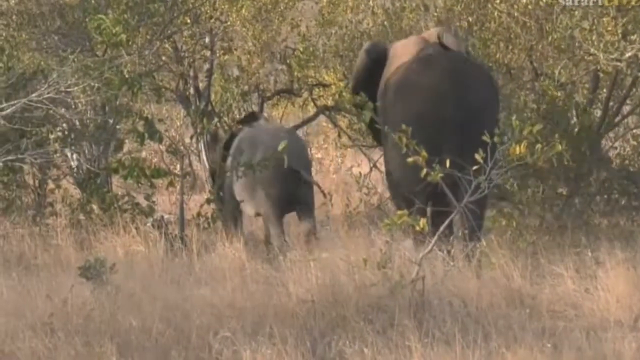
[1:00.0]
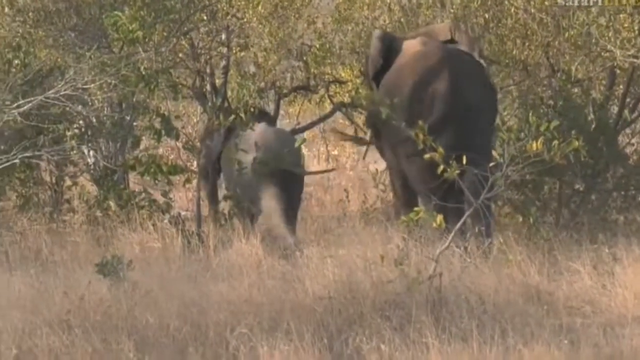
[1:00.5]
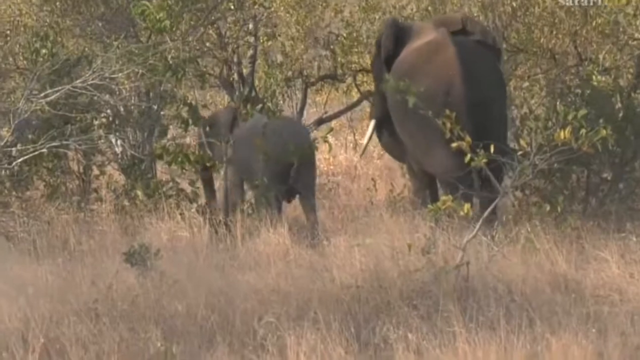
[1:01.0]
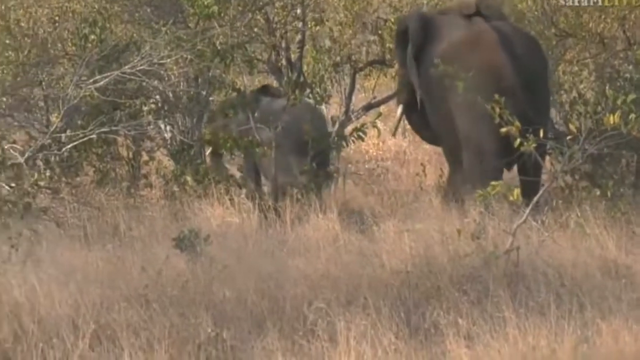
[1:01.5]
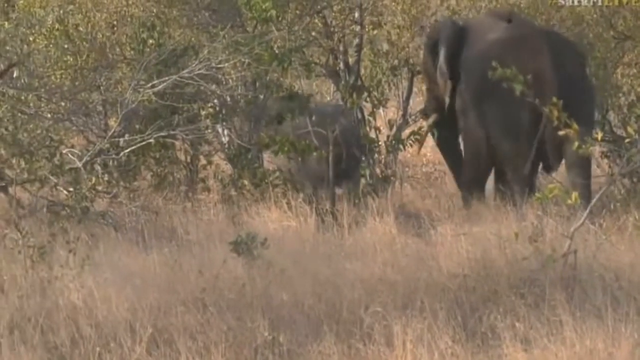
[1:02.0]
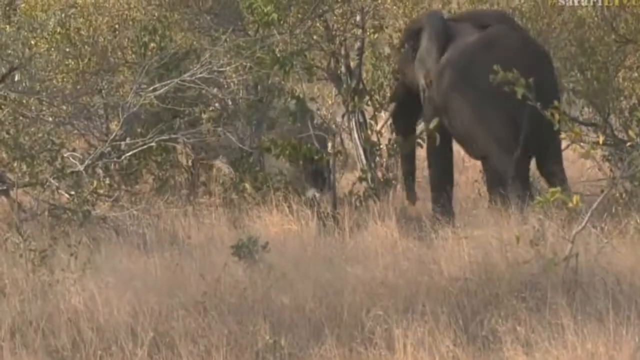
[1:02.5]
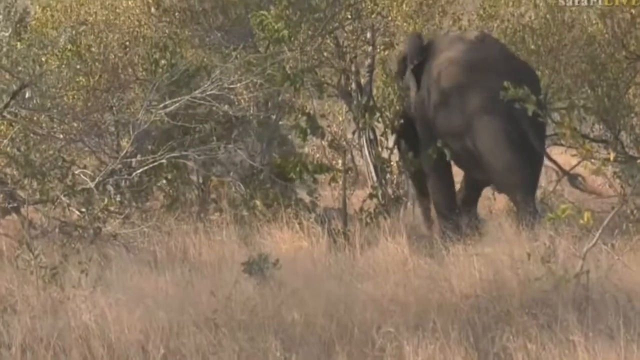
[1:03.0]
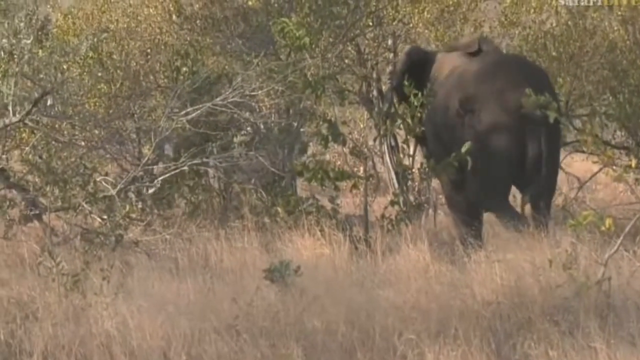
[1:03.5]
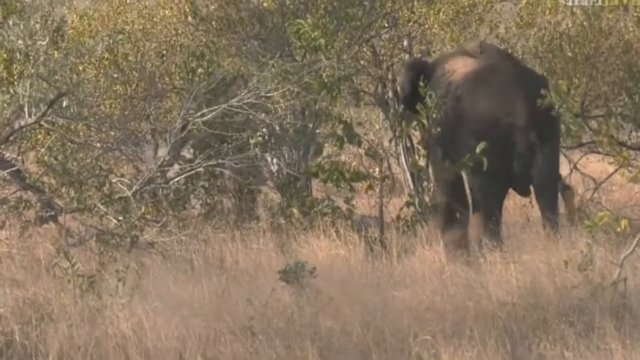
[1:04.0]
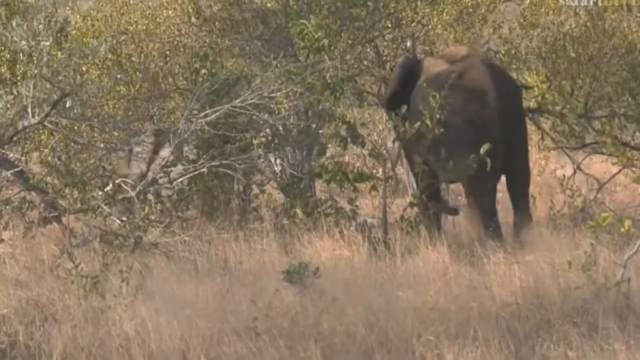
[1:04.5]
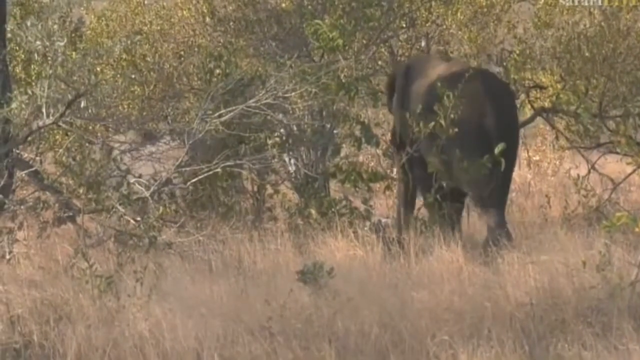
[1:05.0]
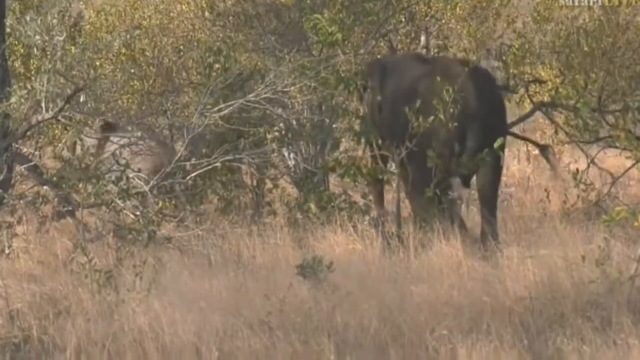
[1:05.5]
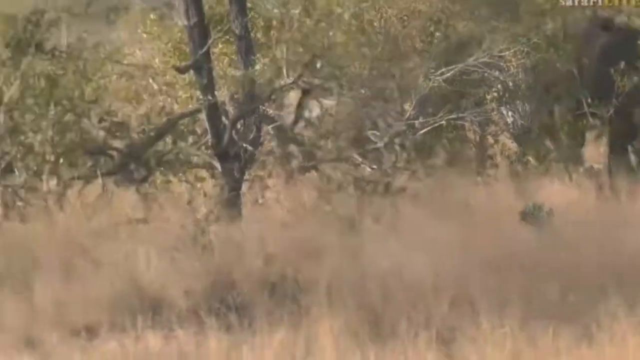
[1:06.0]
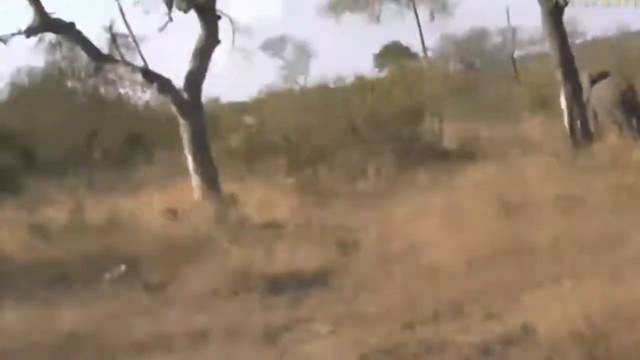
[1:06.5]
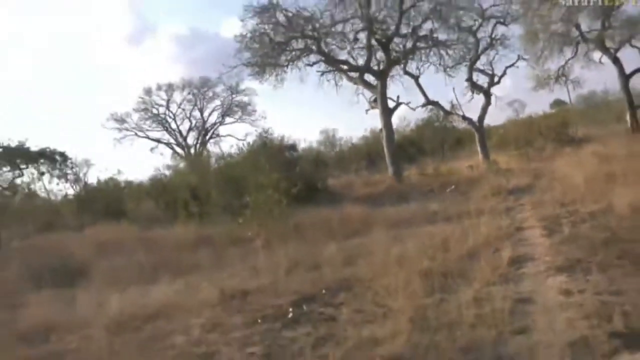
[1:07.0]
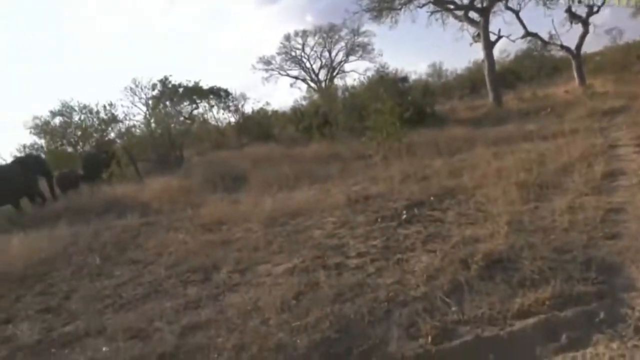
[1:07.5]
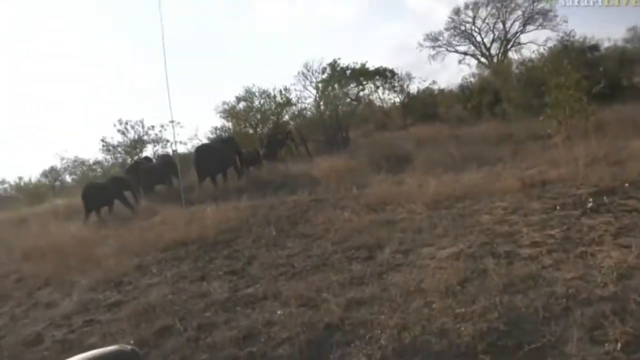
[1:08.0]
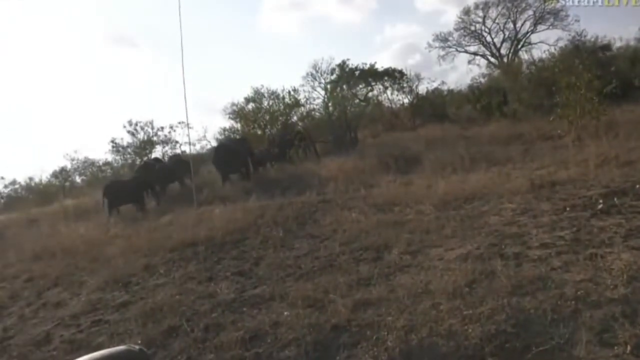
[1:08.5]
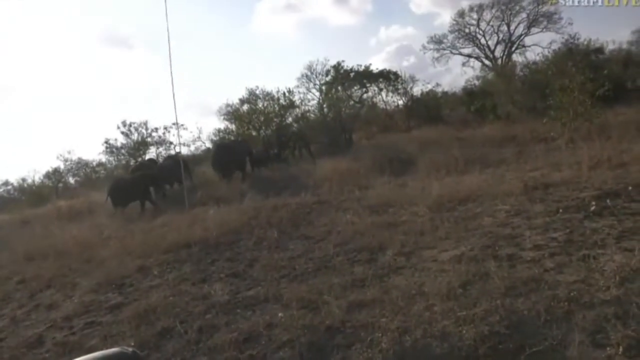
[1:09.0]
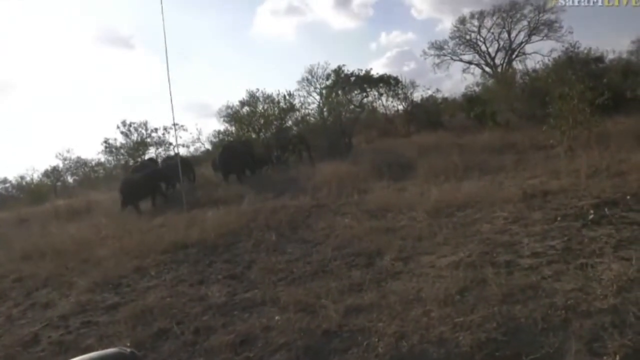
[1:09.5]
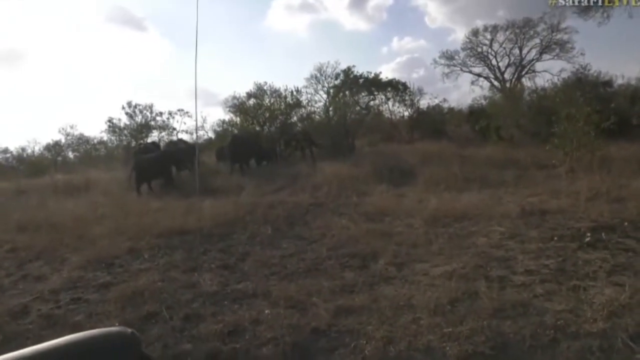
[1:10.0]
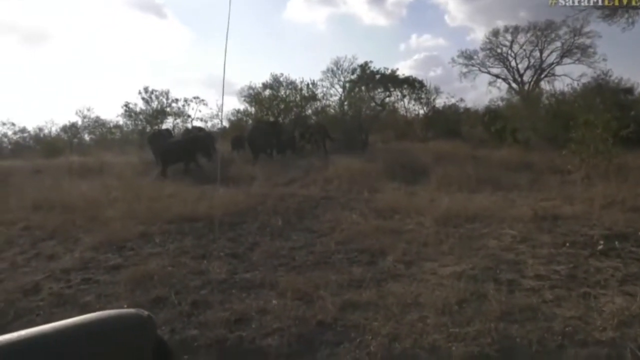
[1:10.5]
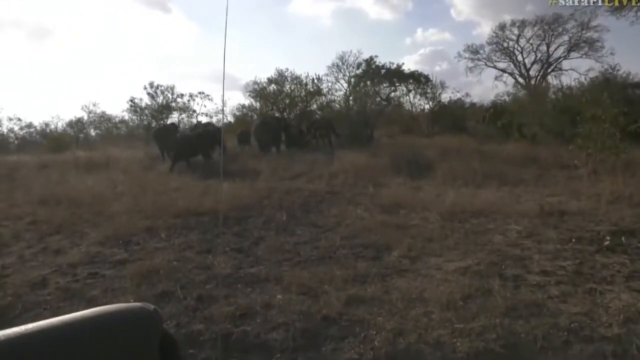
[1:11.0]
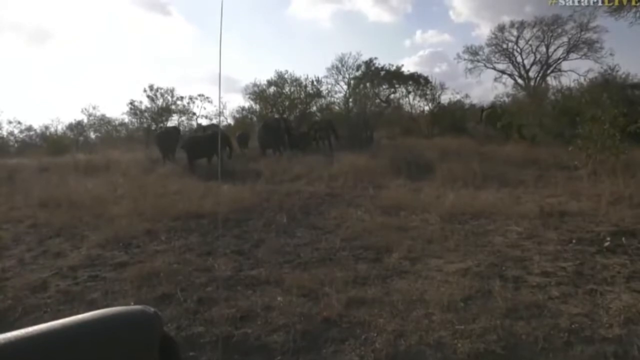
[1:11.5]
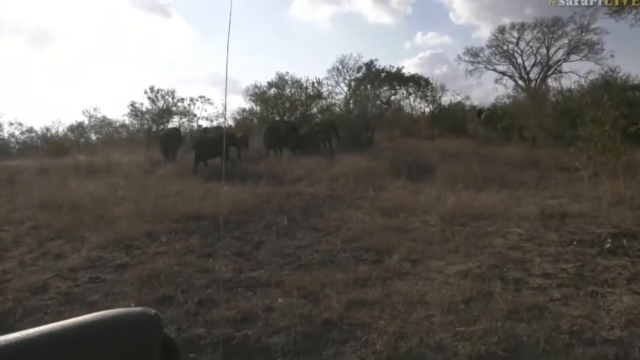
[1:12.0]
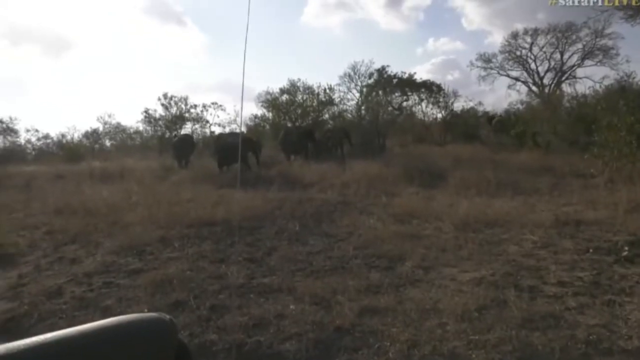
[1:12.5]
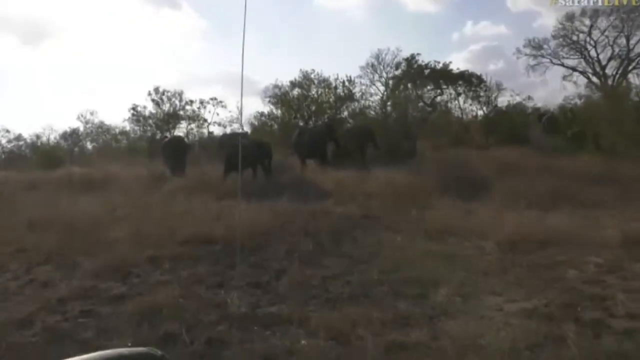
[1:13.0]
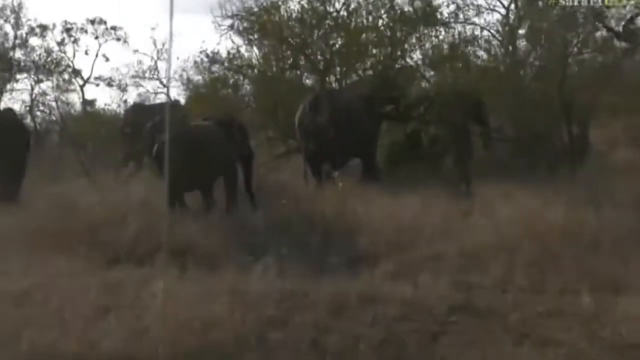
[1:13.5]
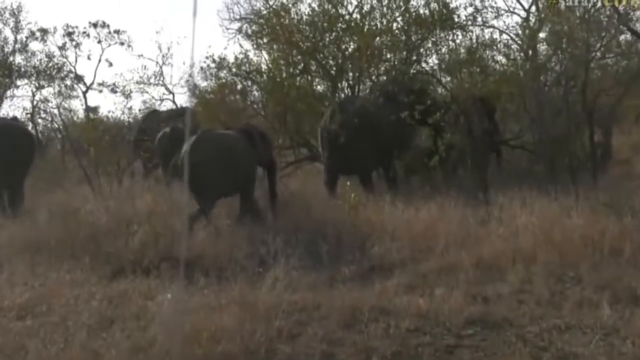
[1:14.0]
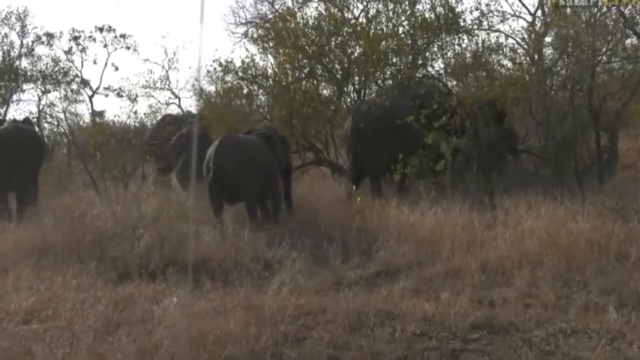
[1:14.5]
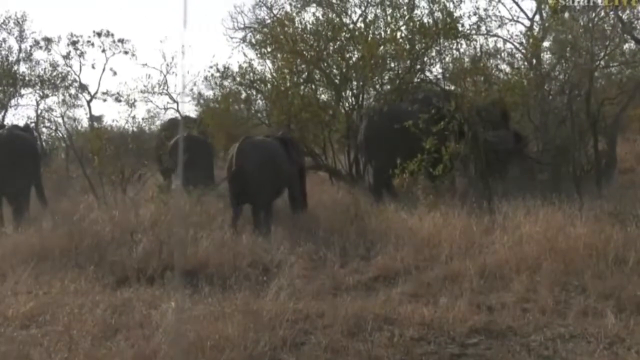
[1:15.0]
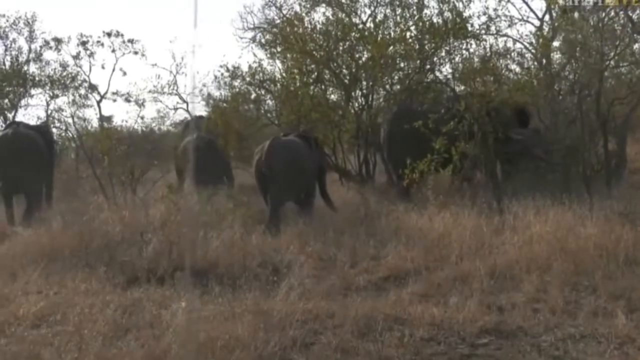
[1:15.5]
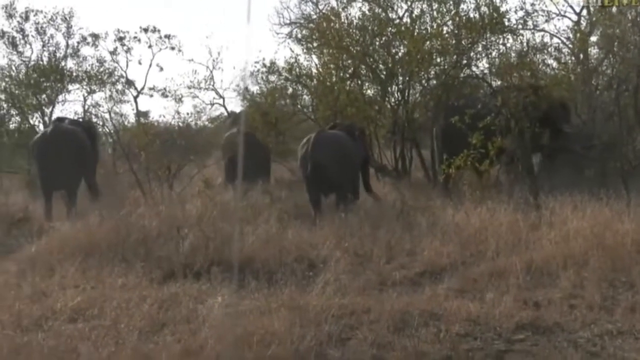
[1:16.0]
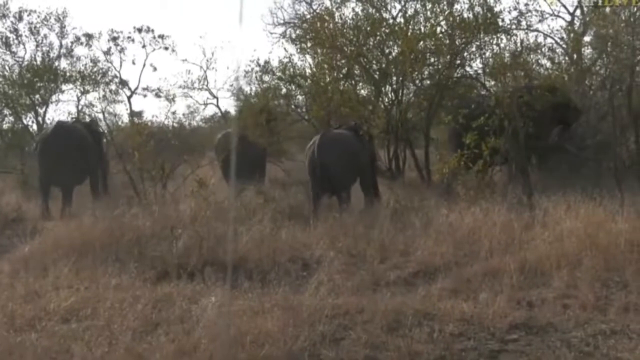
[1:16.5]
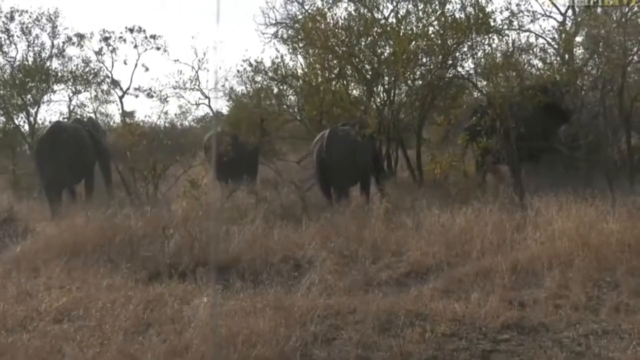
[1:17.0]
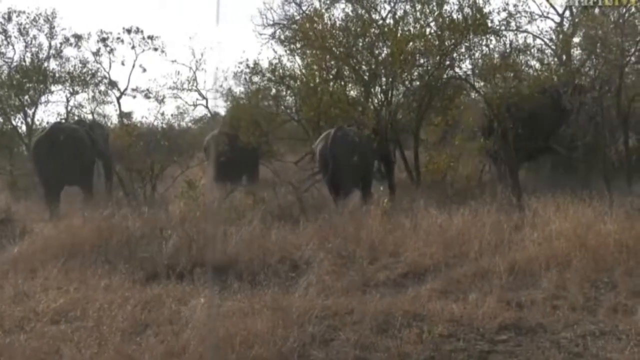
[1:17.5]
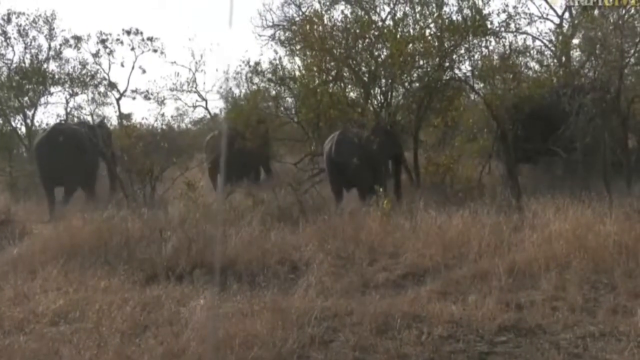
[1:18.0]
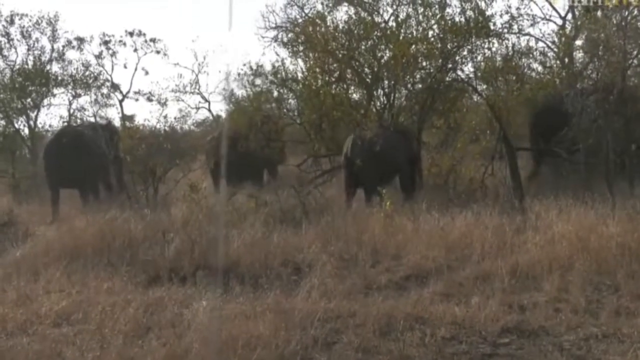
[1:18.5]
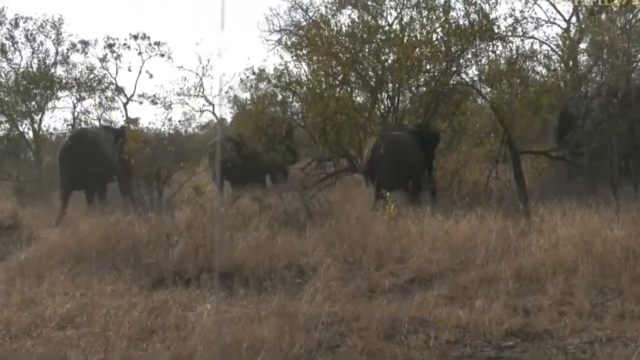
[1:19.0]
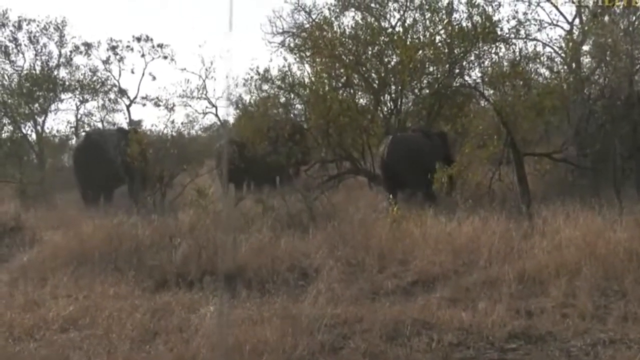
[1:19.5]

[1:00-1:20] Two elephants walk away; the one on the right is larger, and the one on the left is the smallest, possibly an adolescent. There is vegetation of large brown grass, with some small trees in the background. The camera pans back a little to turn around and show other elephants walking away. The herd that was walking in the opposite direction is now considerably further away and looks tiny in the distance; its elephants are of different shapes and sizes and walk in an orderly fashion. It is daytime, looking like maybe early afternoon, with the sun seemingly not yet high. The vehicle is stationary while filming.